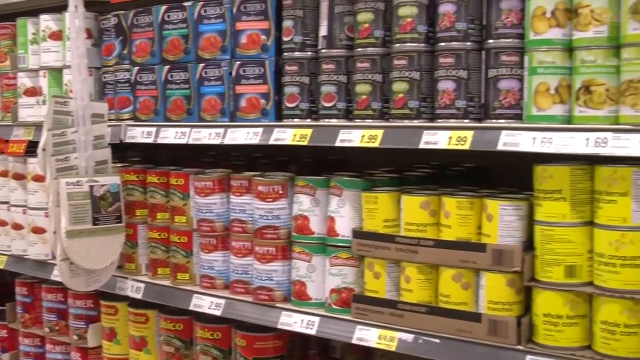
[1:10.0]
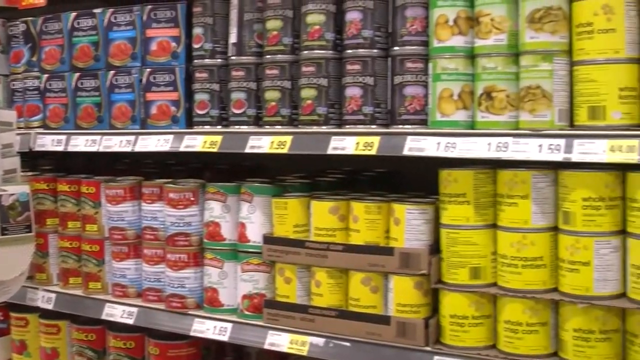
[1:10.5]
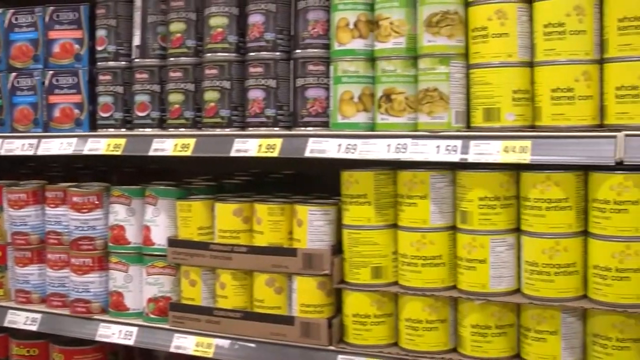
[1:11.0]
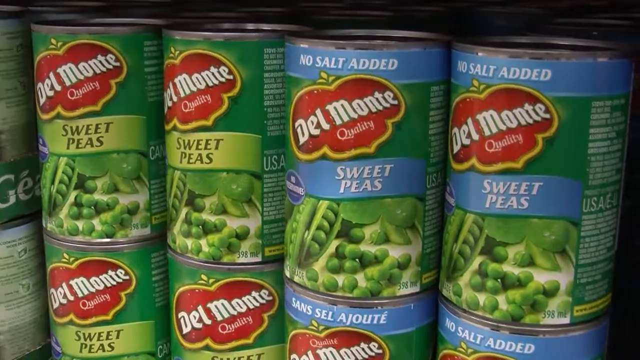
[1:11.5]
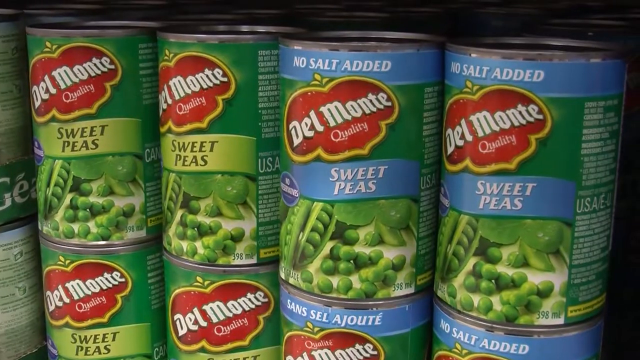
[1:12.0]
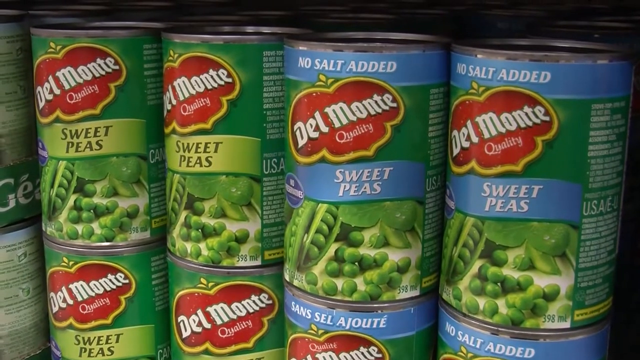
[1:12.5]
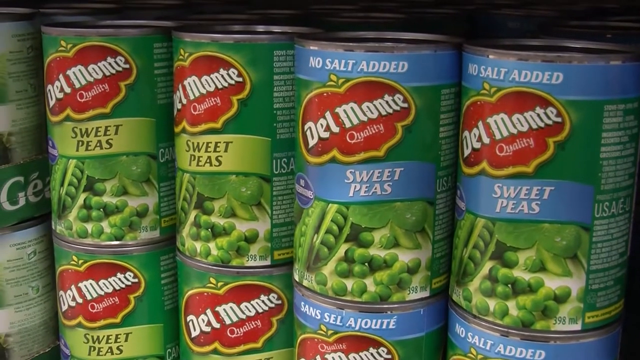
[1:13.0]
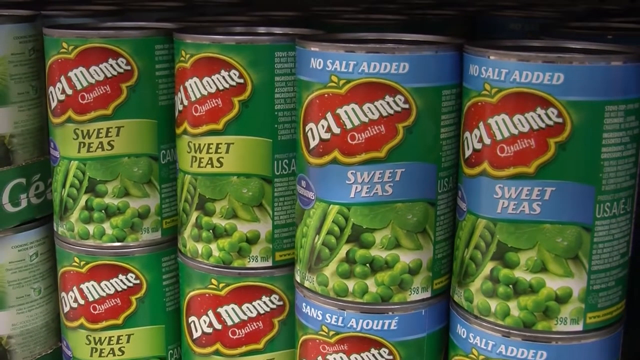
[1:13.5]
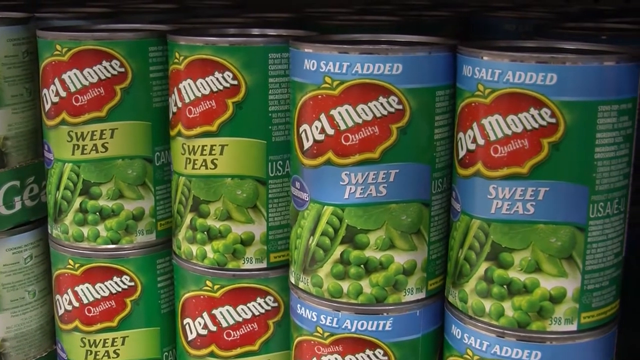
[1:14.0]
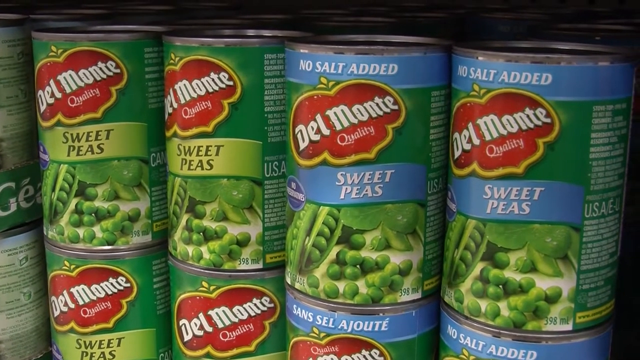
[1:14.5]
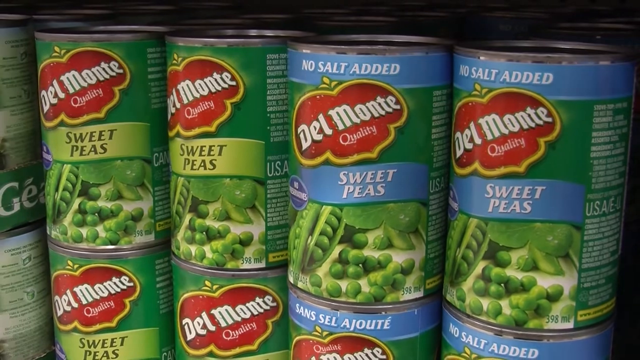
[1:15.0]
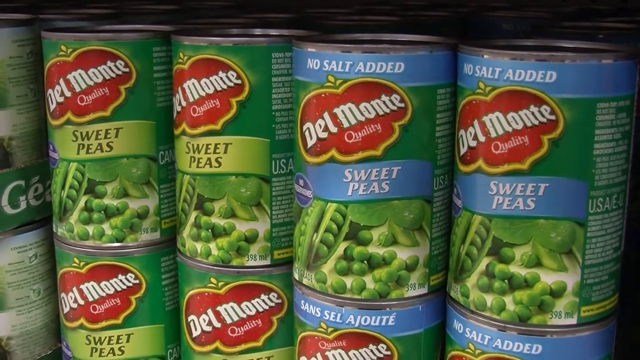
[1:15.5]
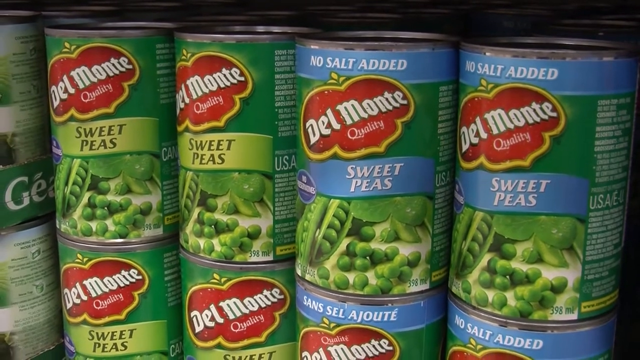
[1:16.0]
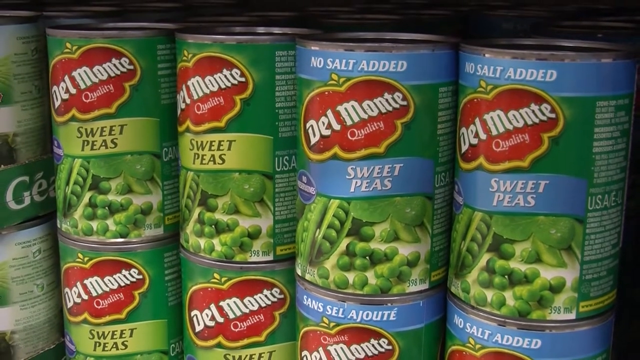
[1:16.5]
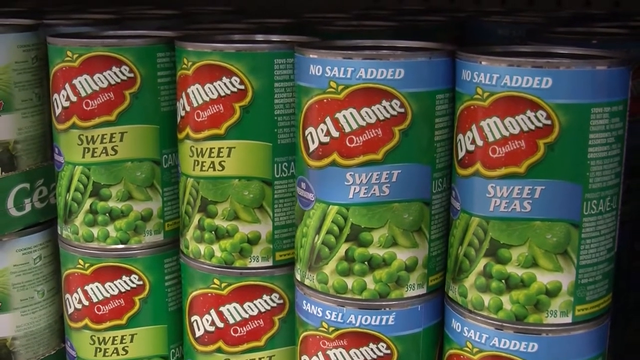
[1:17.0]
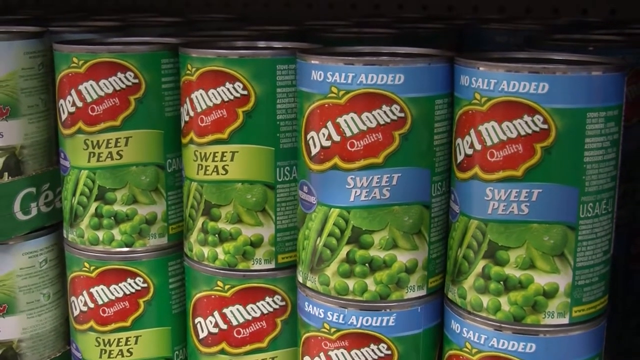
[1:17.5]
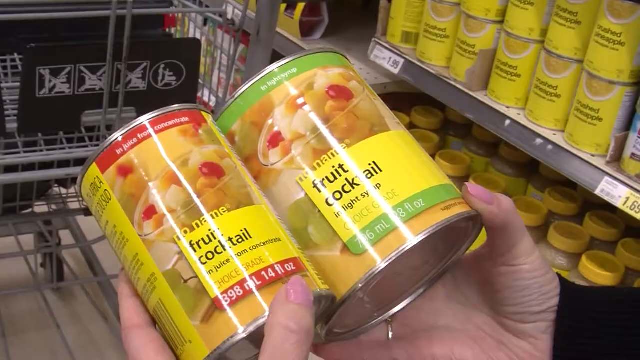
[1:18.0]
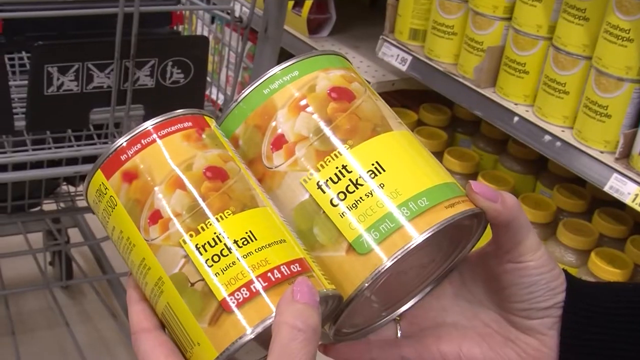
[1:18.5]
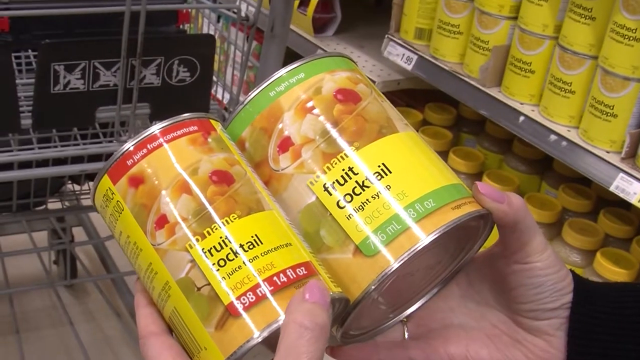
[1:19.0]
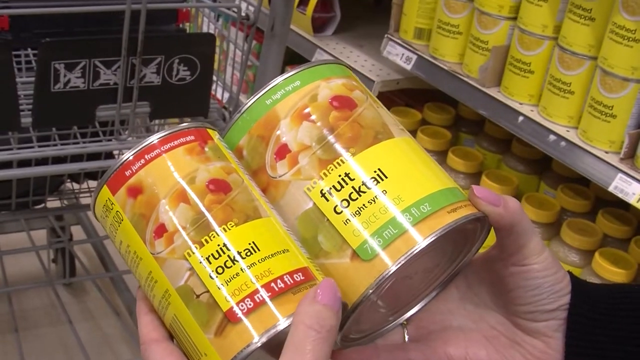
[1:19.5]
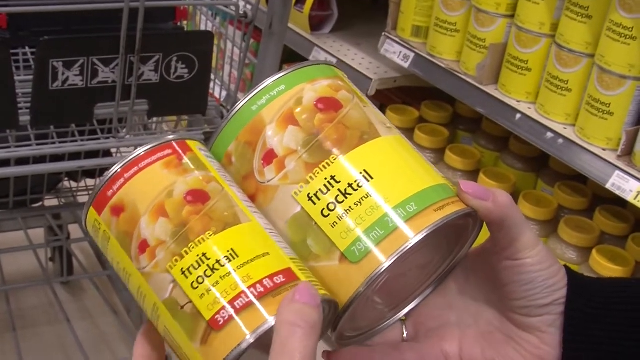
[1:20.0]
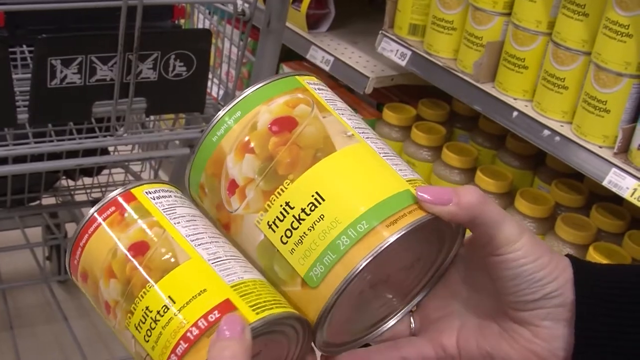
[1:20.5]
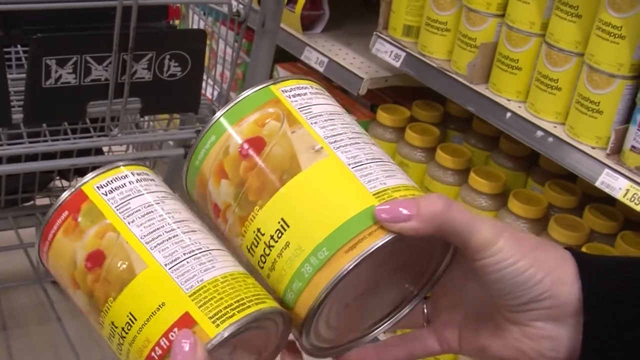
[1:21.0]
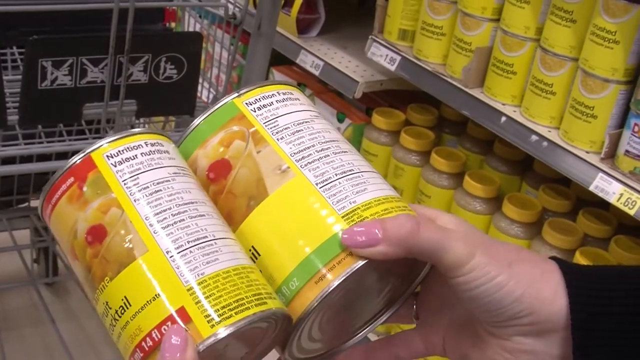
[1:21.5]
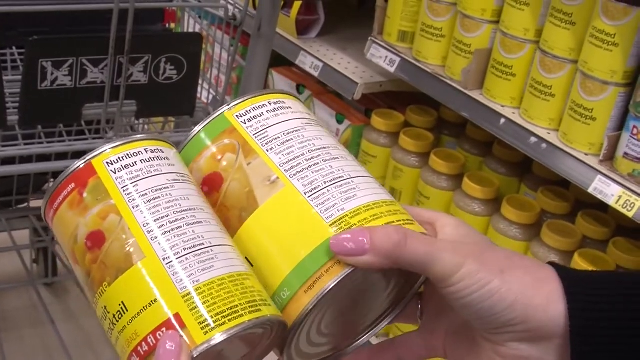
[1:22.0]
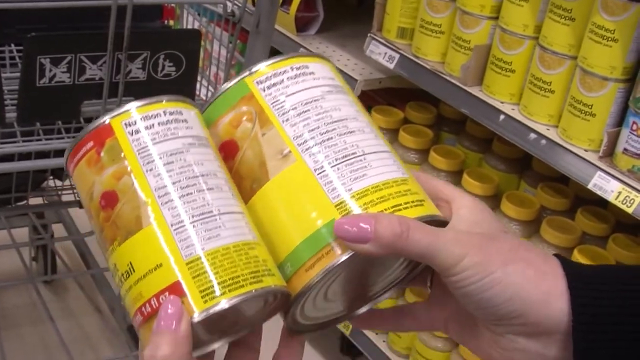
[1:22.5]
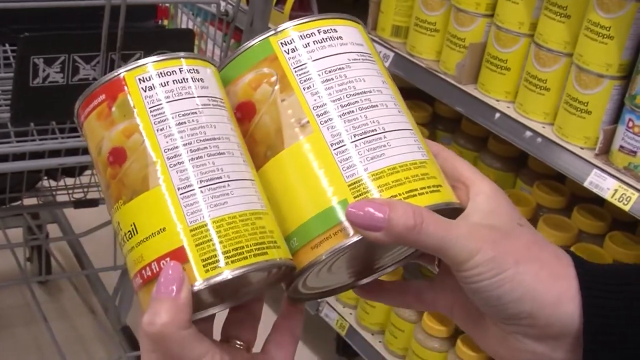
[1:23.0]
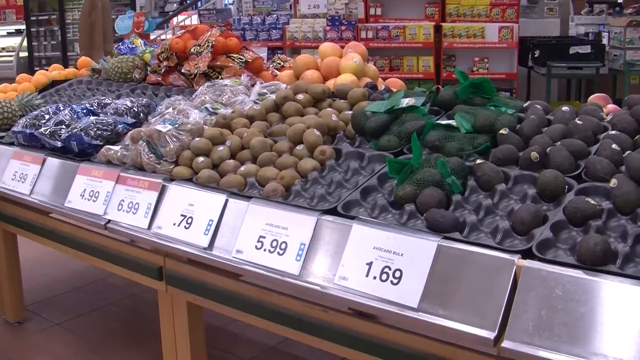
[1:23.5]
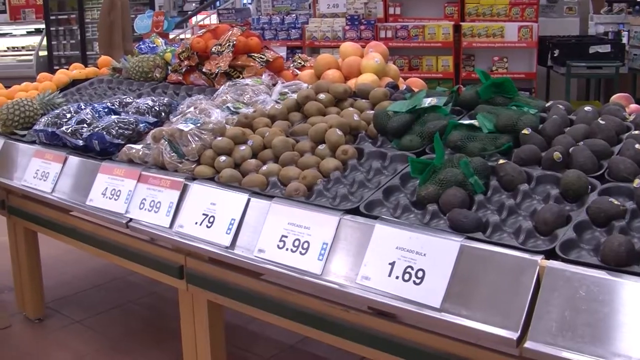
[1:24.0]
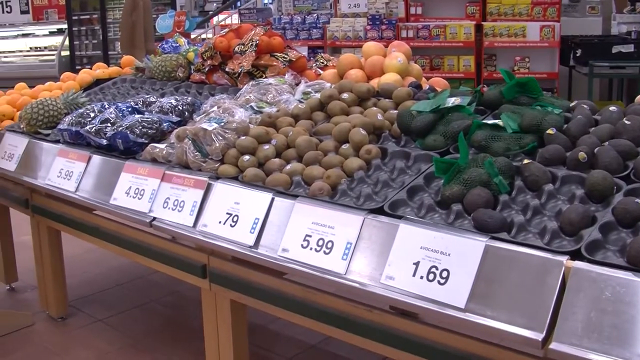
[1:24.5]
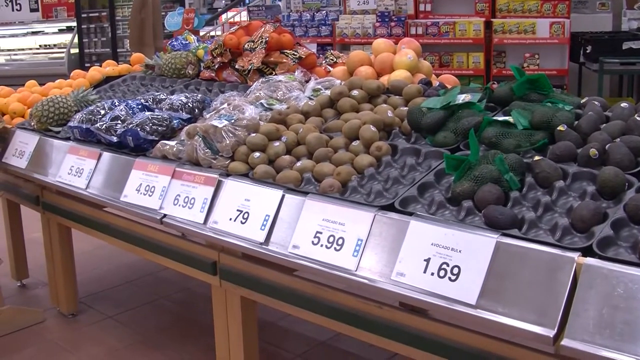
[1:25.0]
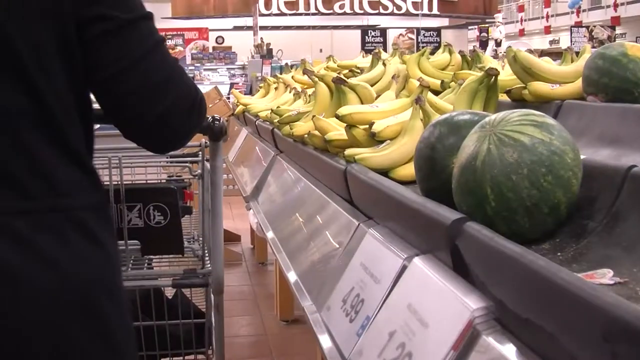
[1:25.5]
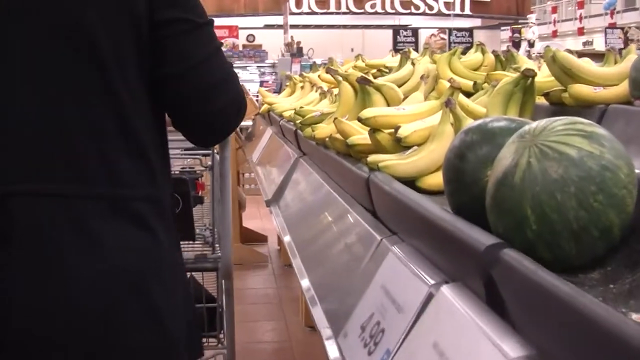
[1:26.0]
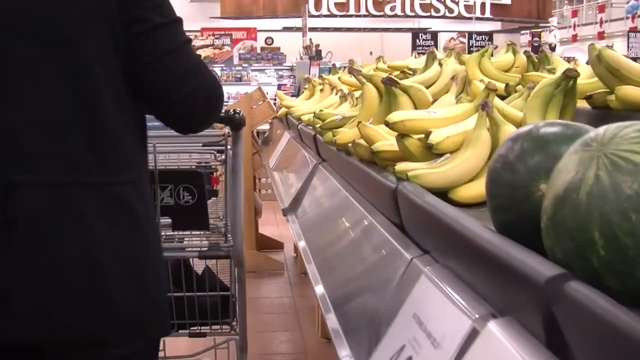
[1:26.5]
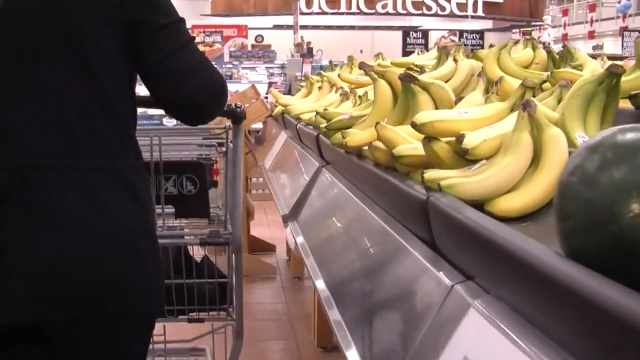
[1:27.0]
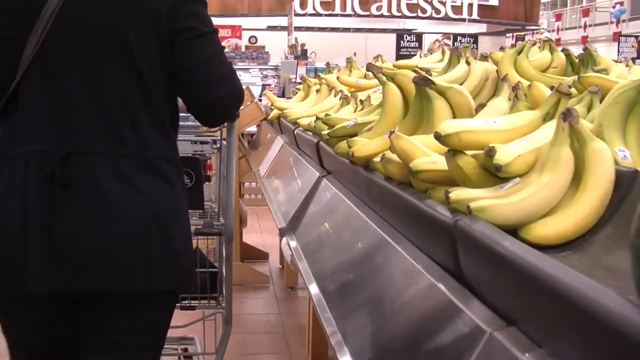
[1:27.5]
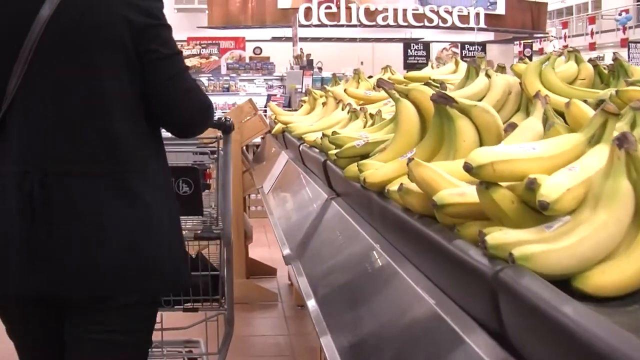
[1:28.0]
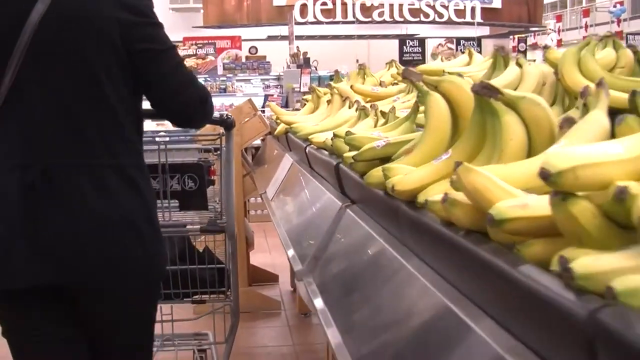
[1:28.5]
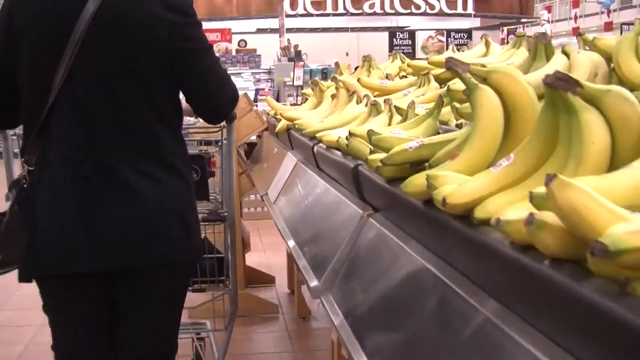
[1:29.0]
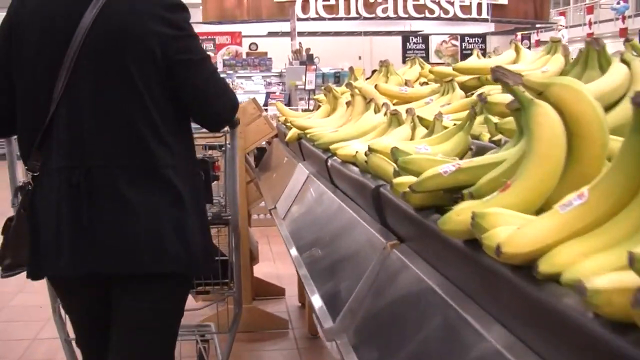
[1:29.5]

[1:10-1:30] The camera pans across a variety of canned vegetables on a grocery aisle with many colors and brands: red, white, black, blue, yellow and green cans. Additional products hang from the aisle in front of the cans. The view then changes to a close-up of Del Monte vegetables, with regular sweet peas on the left and no-salt-added sweet peas on the right, and the shot focuses on these briefly. Next, a woman holds two separate cans of fruit cocktail mixture over her grocery cart. One has a red banner and appears to hold a slightly smaller amount than the one in her right hand, which has a green banner. She is light-skinned, wears a long black blouse and has pink nails, and she rotates the cans to look at the ingredients on the back. A shot of produce follows, appearing to show kiwis, avocado, pineapples and oranges. The woman then walks along another fruit aisle, where there appear to be a number of bananas on the right side of the screen.